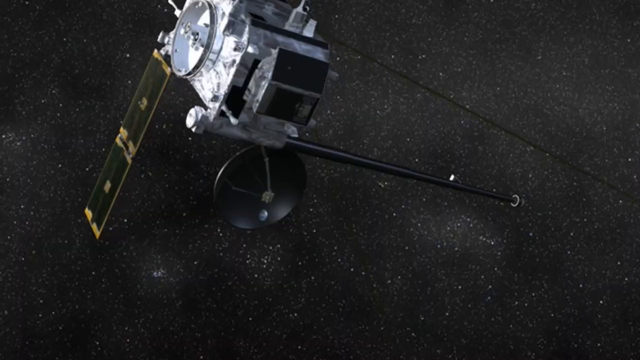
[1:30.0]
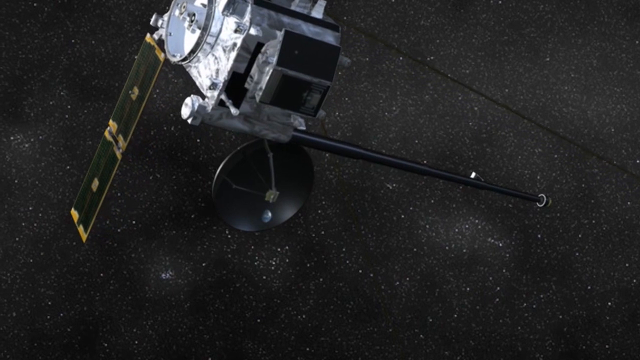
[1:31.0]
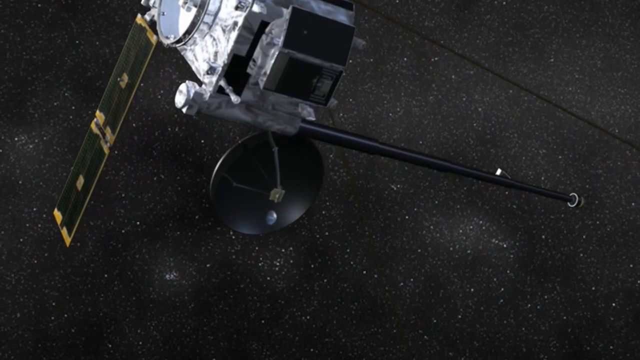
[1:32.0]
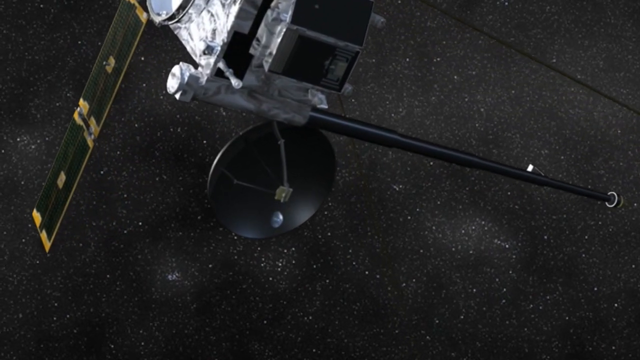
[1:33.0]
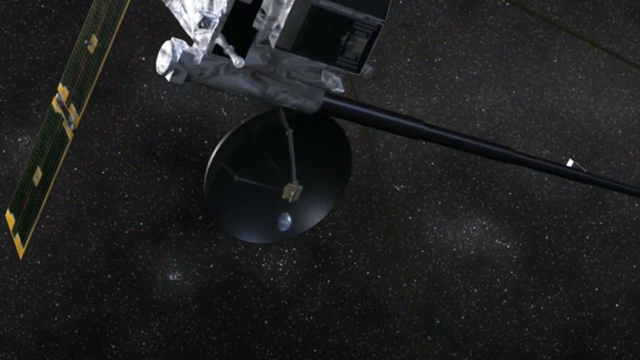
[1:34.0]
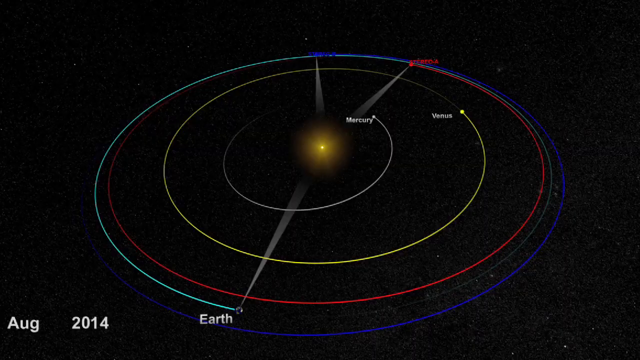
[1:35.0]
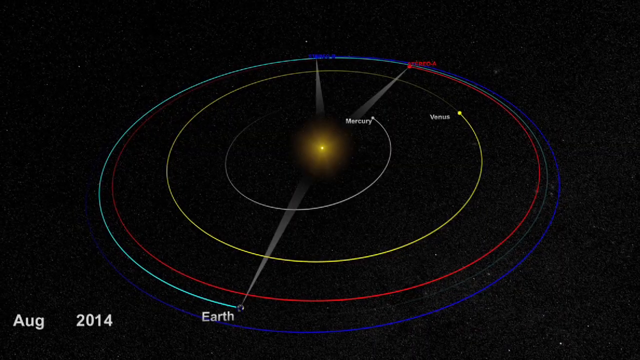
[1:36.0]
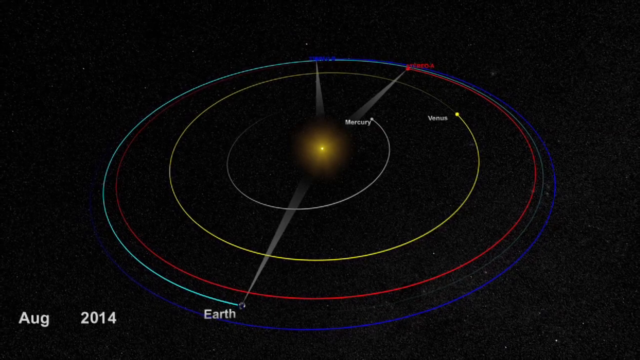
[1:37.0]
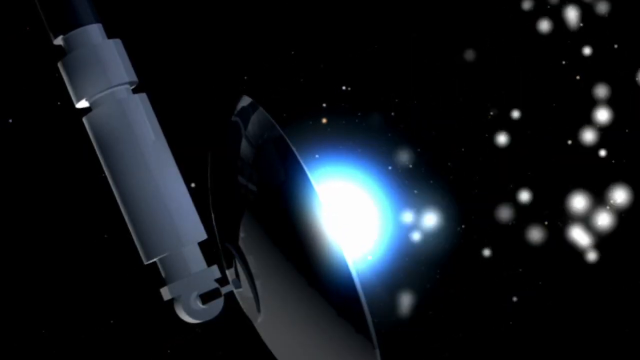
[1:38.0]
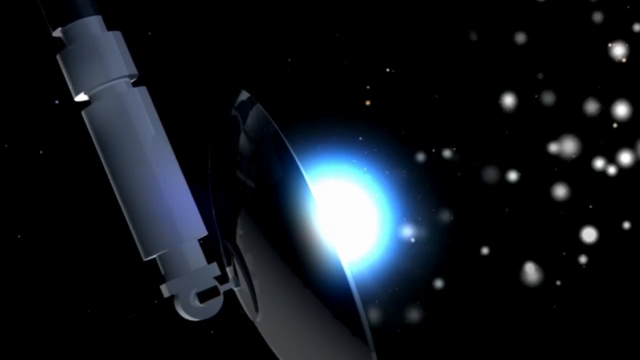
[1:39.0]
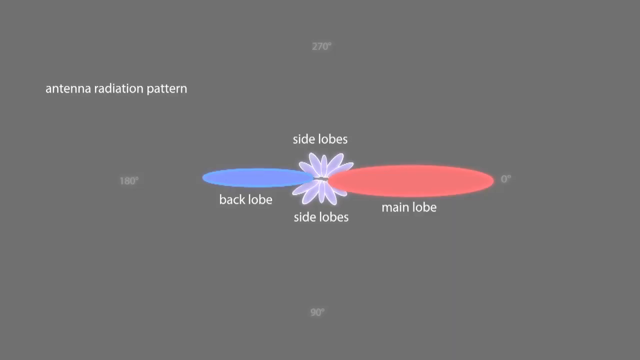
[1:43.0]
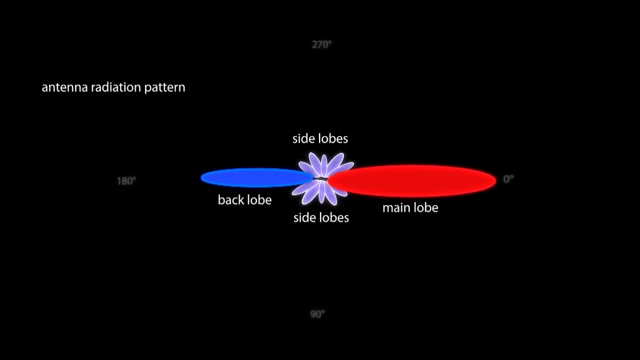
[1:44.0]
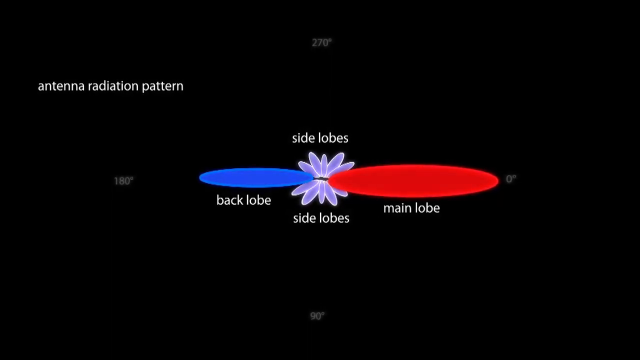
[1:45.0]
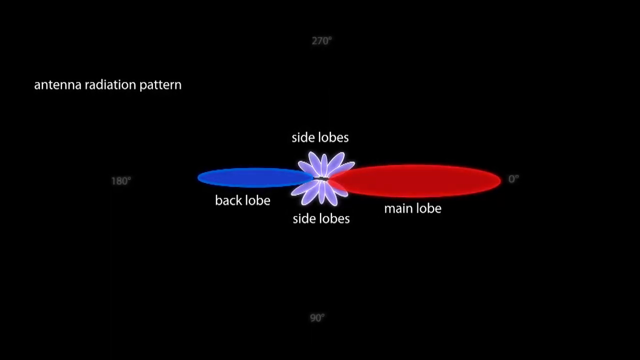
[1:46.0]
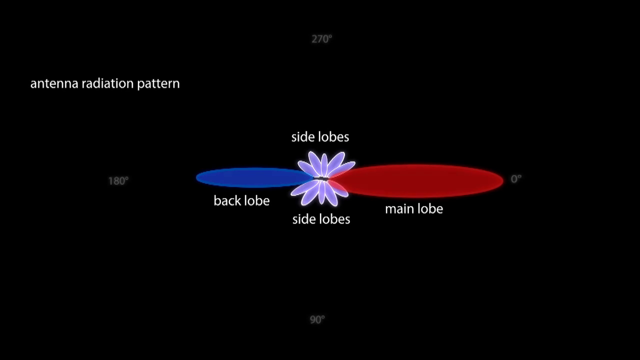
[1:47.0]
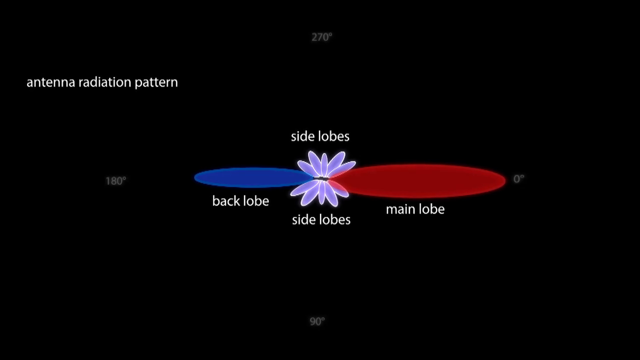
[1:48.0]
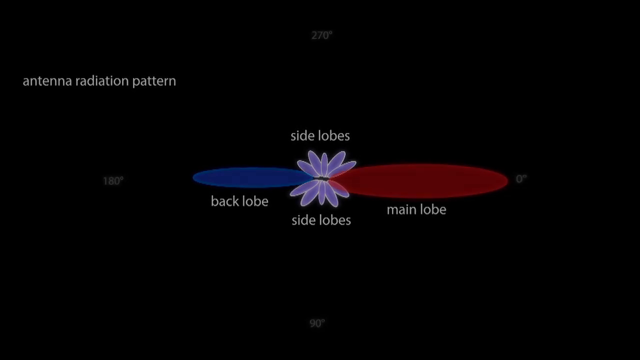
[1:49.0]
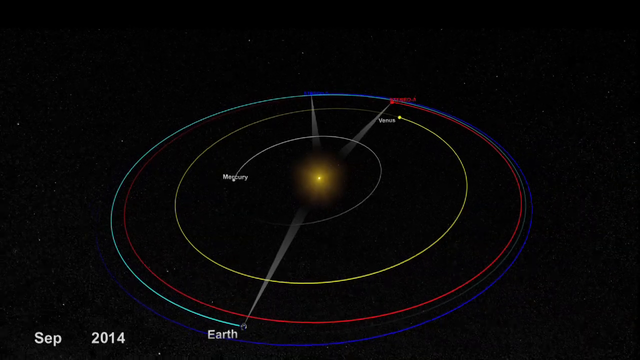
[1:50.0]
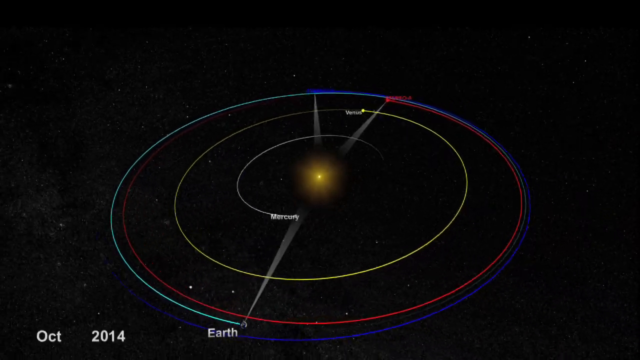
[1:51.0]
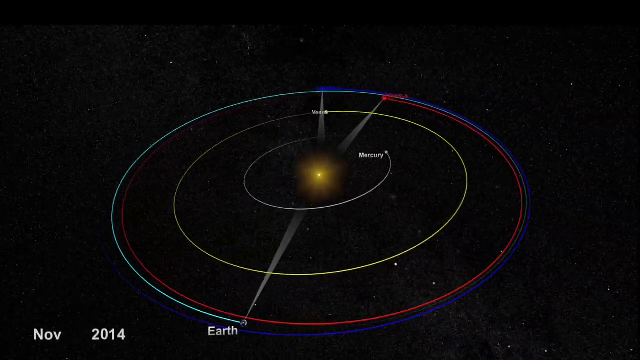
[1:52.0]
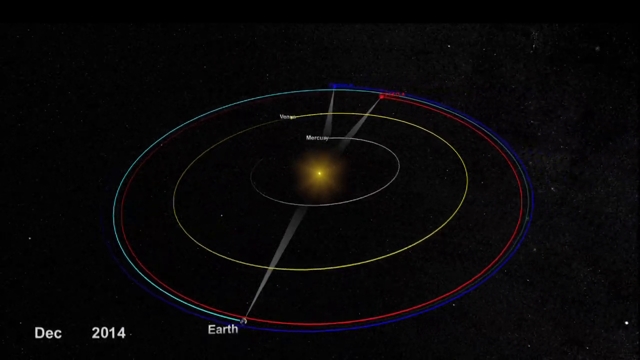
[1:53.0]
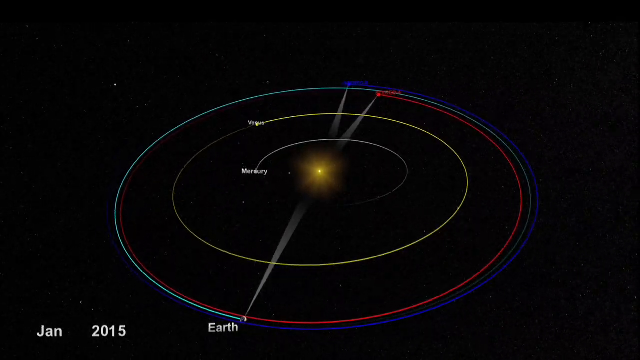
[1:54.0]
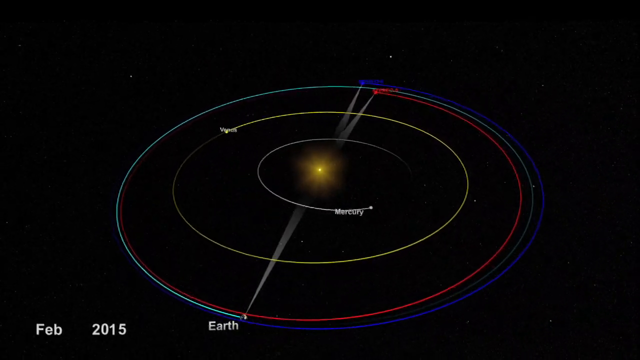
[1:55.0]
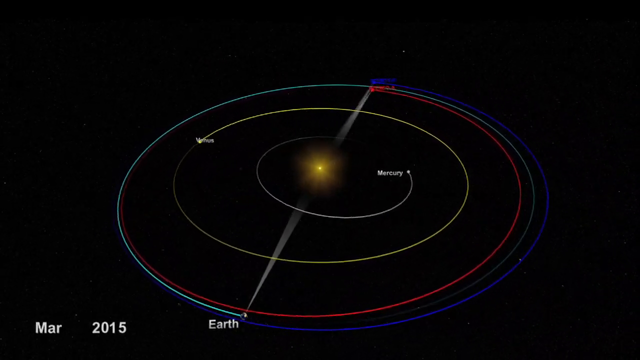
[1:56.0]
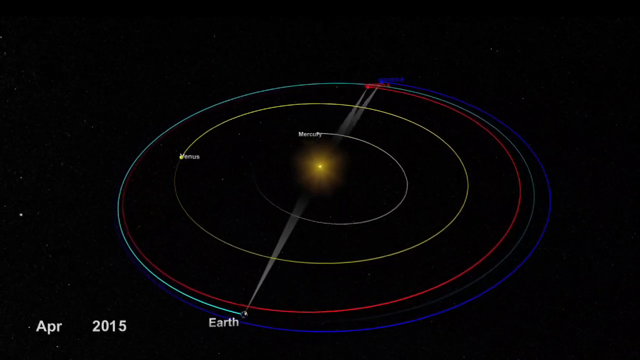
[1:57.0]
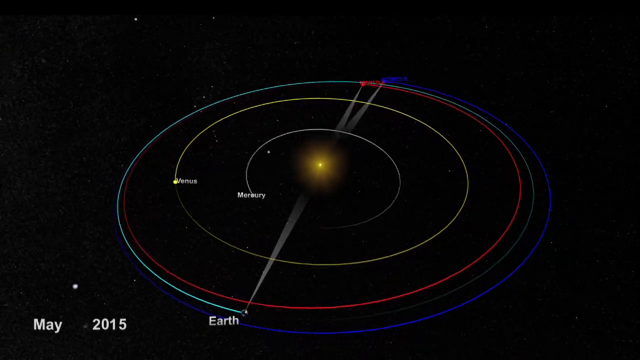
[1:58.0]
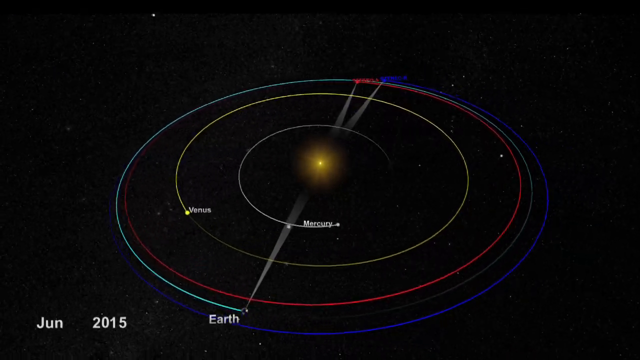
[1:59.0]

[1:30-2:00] A close-up shows a large satellite with large black antennae extending towards the bottom right and large solar panels on either side facing towards the top left corner. The camera slowly pans in towards a large black satellite dish attached to the bottom of it; the dish shows a reflection of planet Earth on its bottom, implying it is pointed towards Earth. In the background is space with various white dots representing stars and planets. The video cuts to a rendition of the solar system labeled "August 2014" in the bottom left, showing Mercury, Venus, Earth and two satellites rotating around the sun. The two satellites stay on the opposite side of the sun from Earth, with large white beams pointed towards the sun from the two satellites at the top and Earth at the bottom. The video then cuts to one of the satellites pointing towards the right as a representation of energy builds up in its dish and the screen slowly turns white, until it is completely white. A new slide appears with various white labels on different shapes.